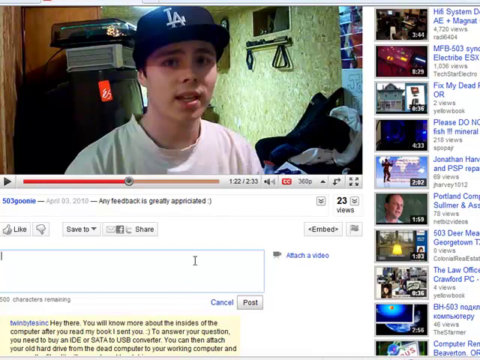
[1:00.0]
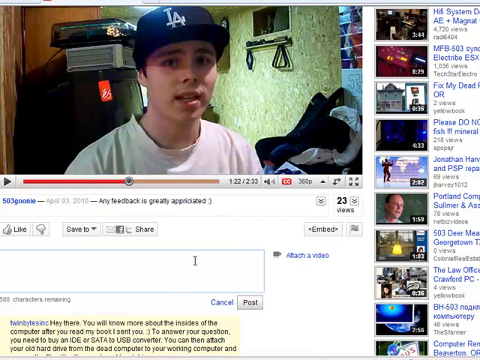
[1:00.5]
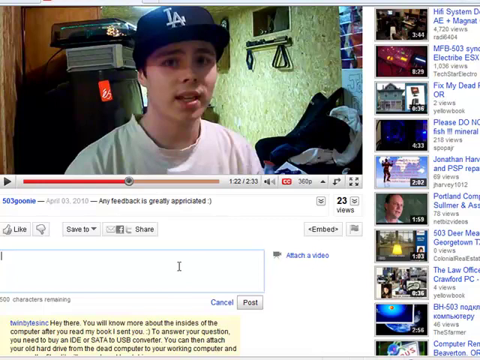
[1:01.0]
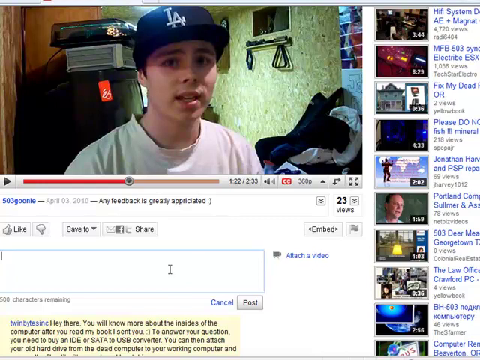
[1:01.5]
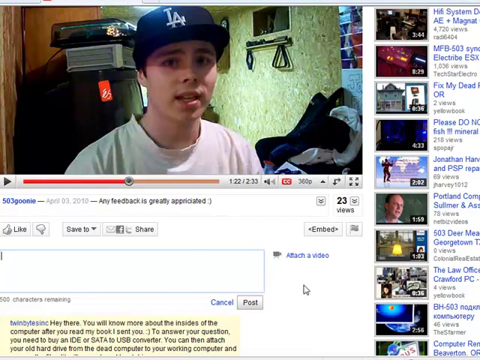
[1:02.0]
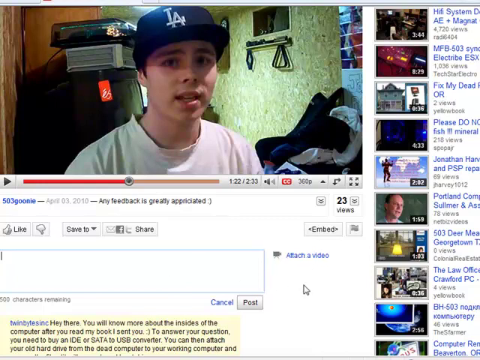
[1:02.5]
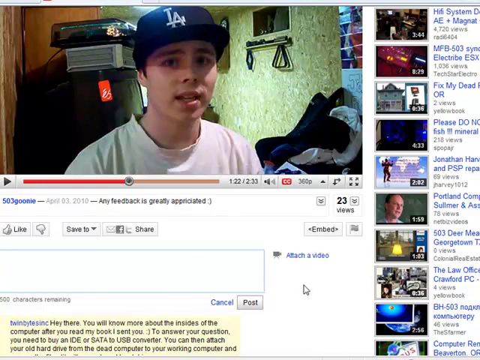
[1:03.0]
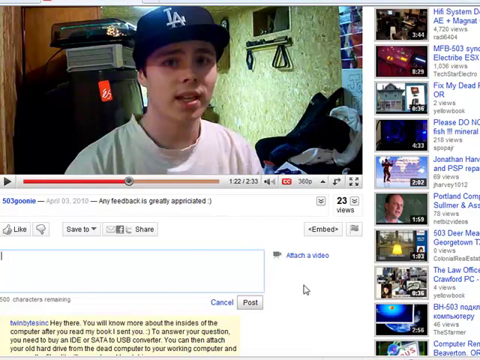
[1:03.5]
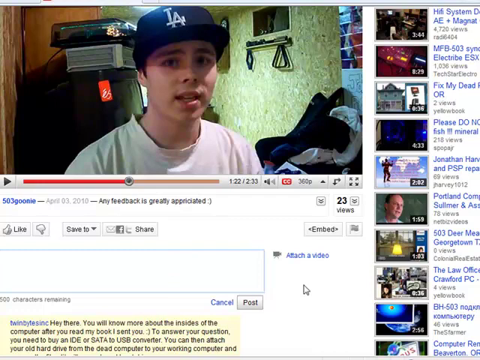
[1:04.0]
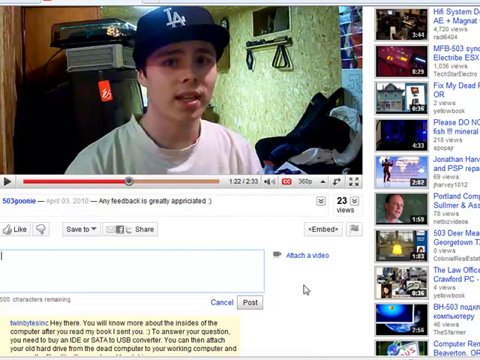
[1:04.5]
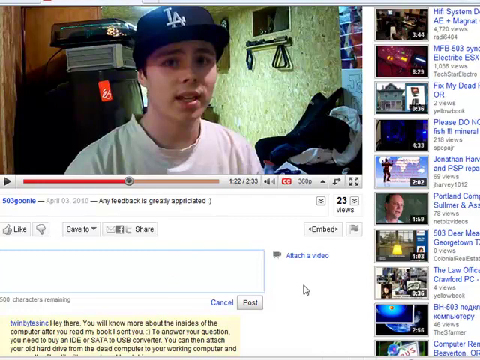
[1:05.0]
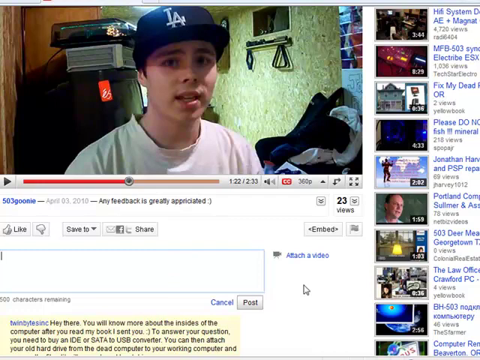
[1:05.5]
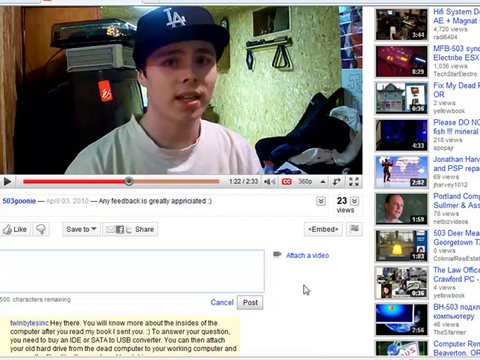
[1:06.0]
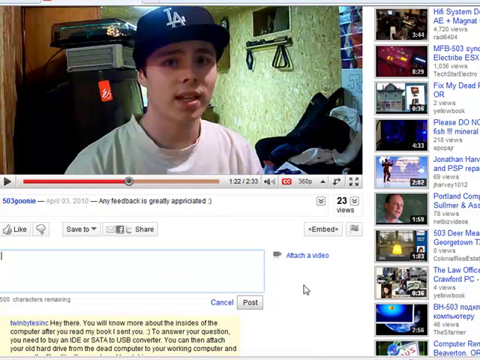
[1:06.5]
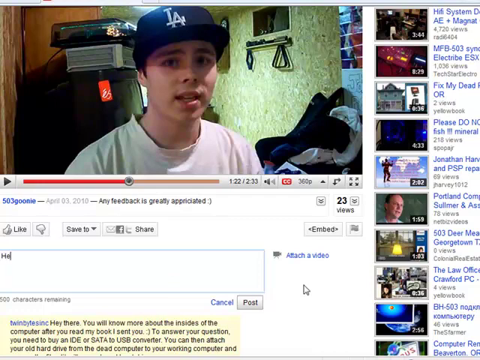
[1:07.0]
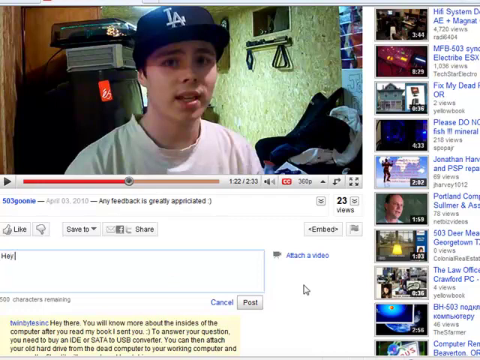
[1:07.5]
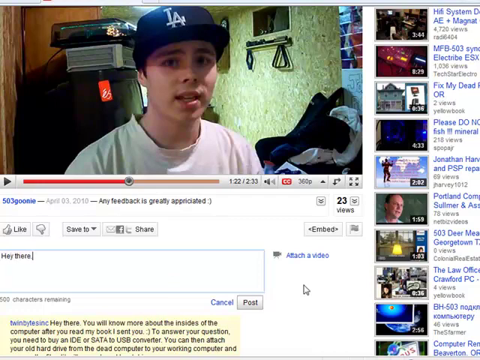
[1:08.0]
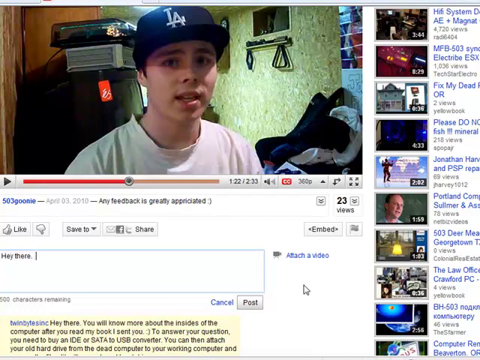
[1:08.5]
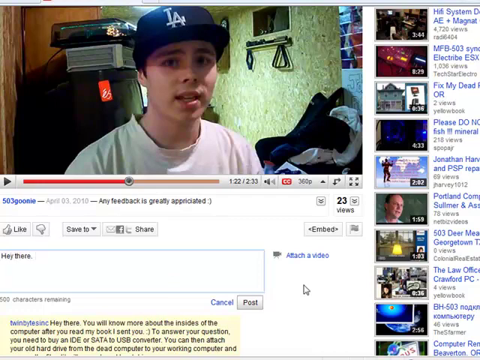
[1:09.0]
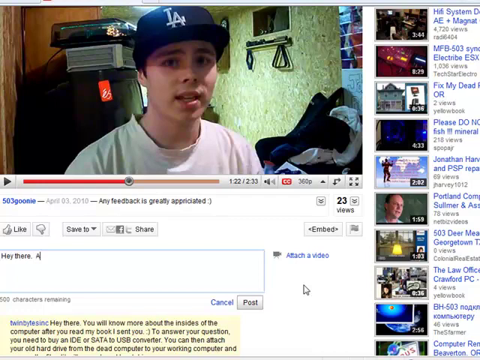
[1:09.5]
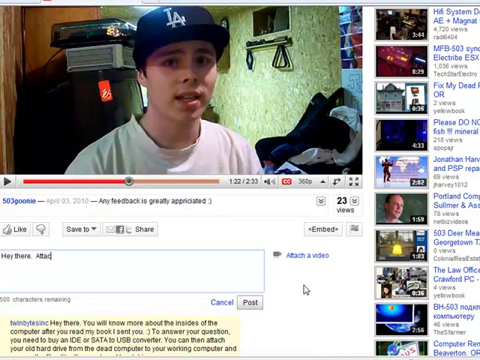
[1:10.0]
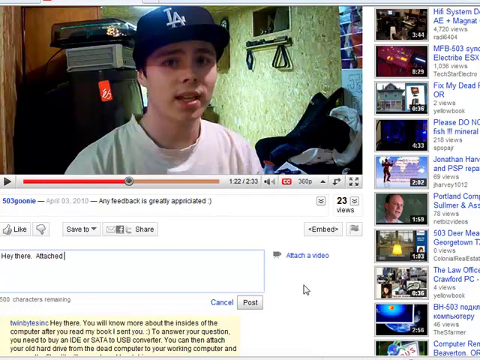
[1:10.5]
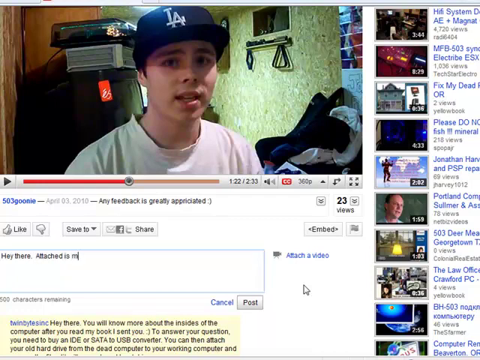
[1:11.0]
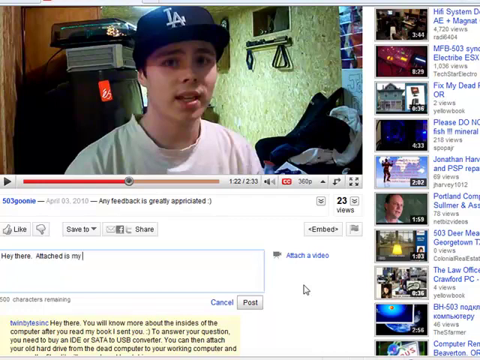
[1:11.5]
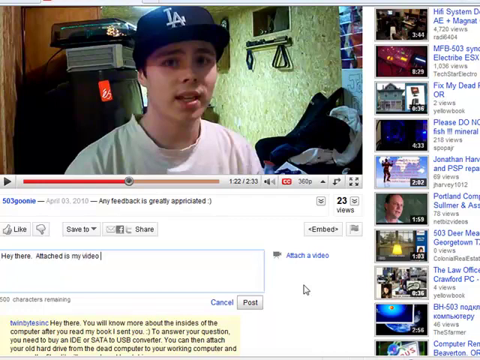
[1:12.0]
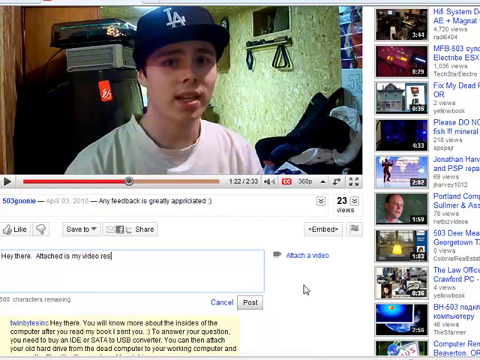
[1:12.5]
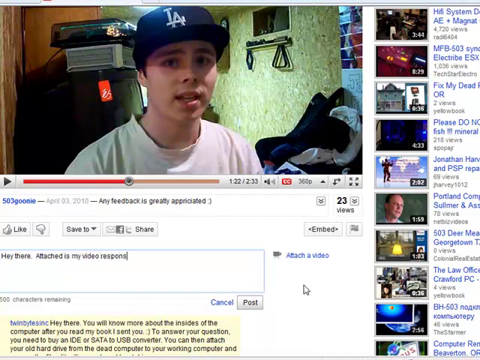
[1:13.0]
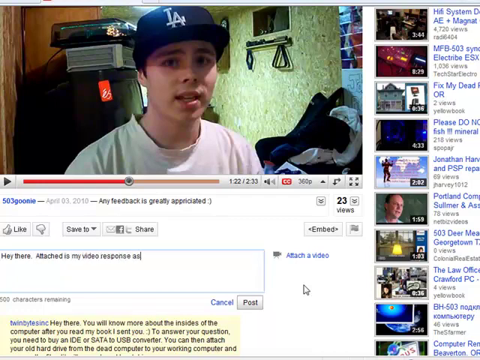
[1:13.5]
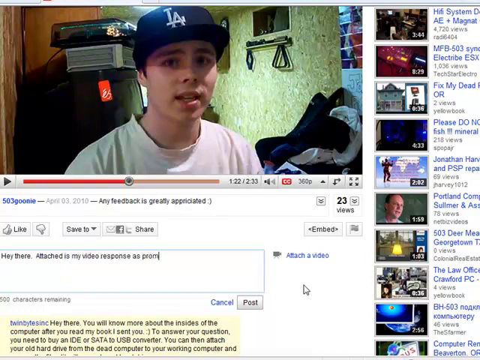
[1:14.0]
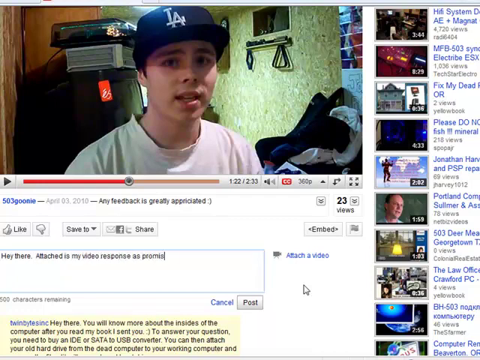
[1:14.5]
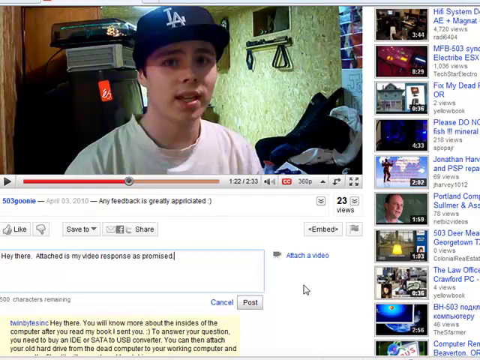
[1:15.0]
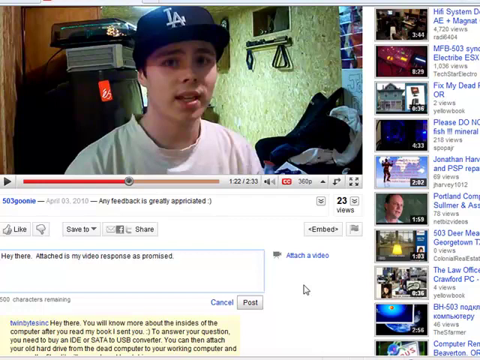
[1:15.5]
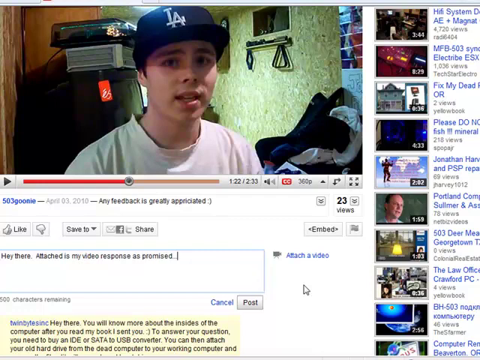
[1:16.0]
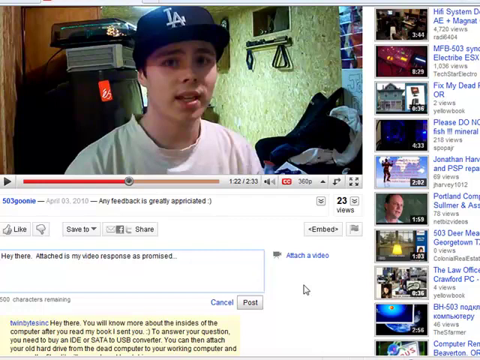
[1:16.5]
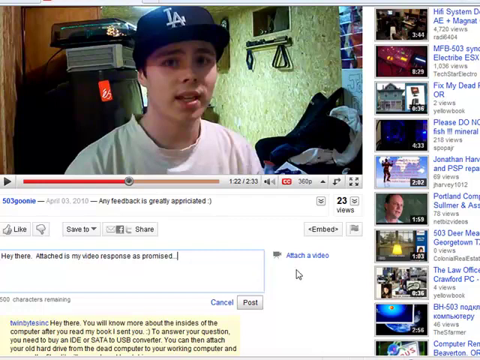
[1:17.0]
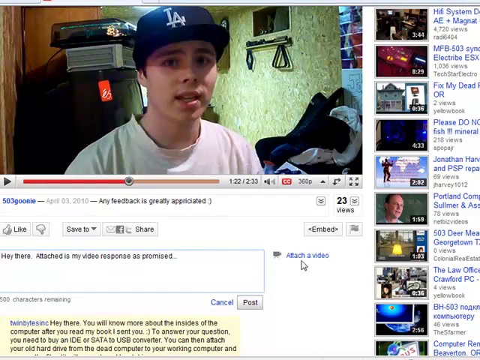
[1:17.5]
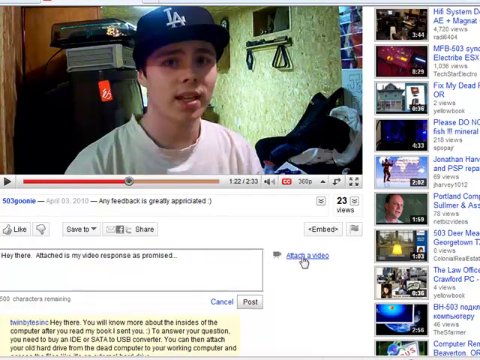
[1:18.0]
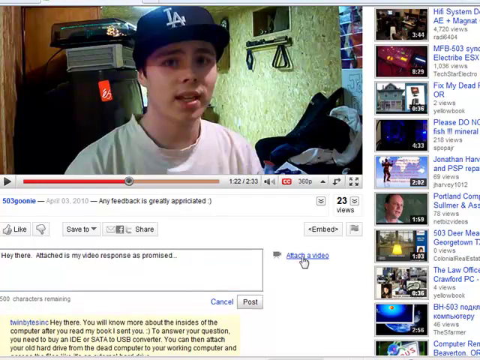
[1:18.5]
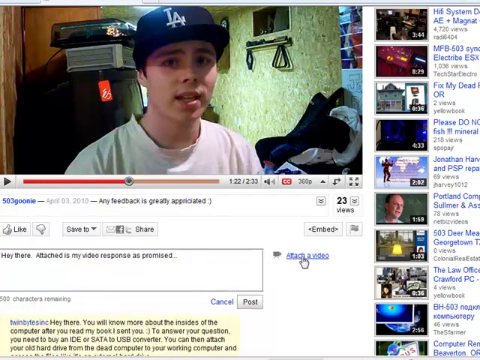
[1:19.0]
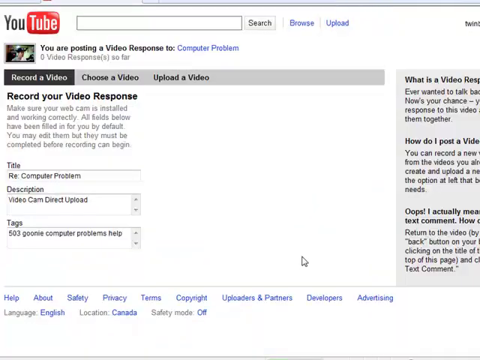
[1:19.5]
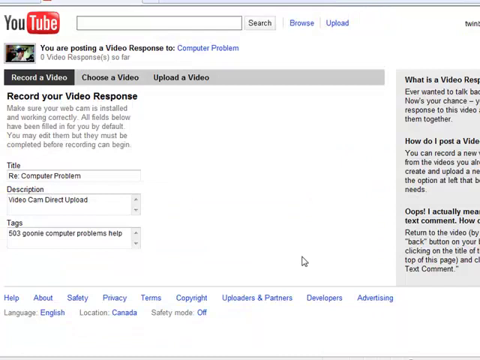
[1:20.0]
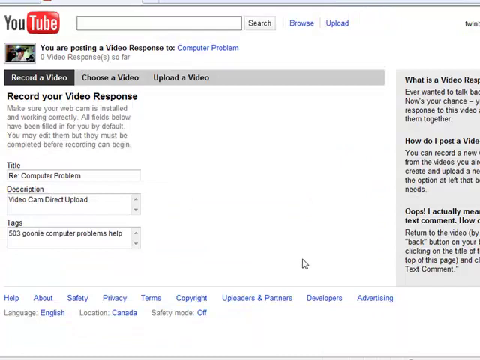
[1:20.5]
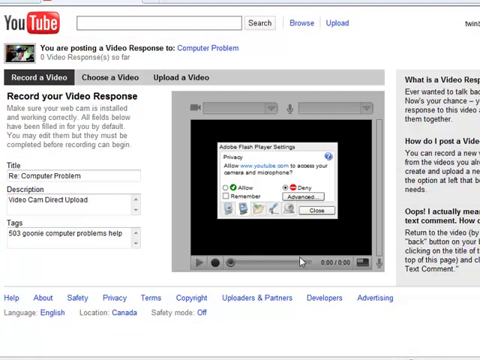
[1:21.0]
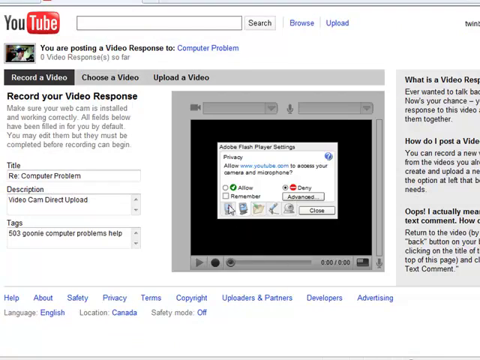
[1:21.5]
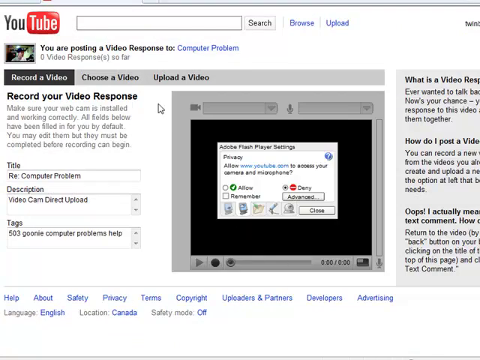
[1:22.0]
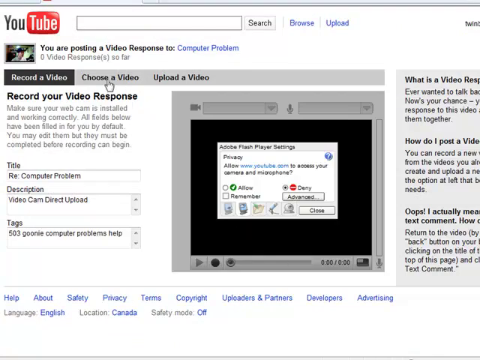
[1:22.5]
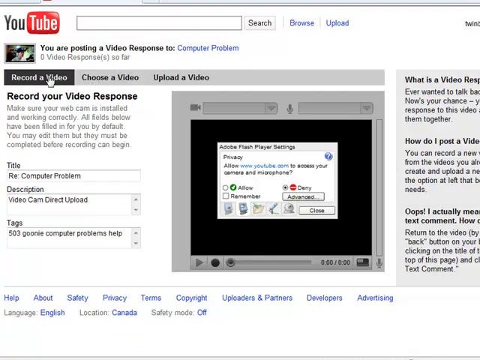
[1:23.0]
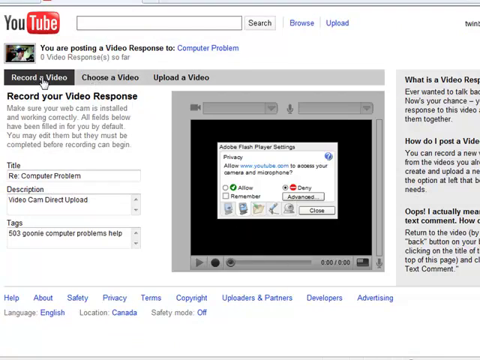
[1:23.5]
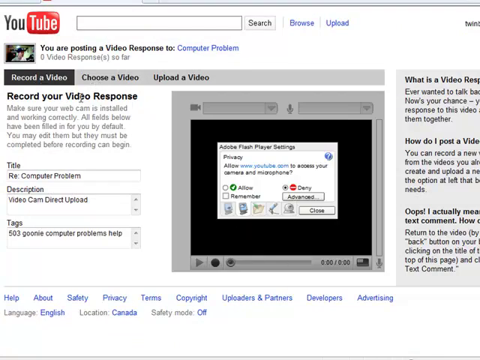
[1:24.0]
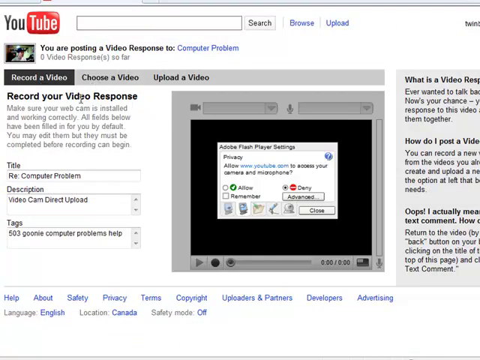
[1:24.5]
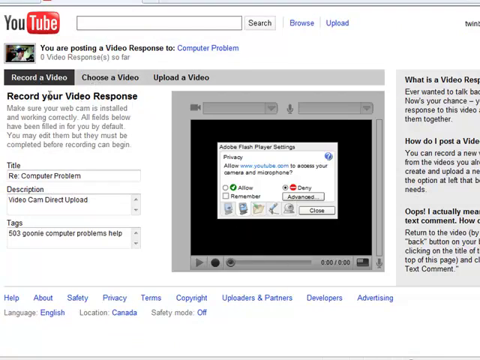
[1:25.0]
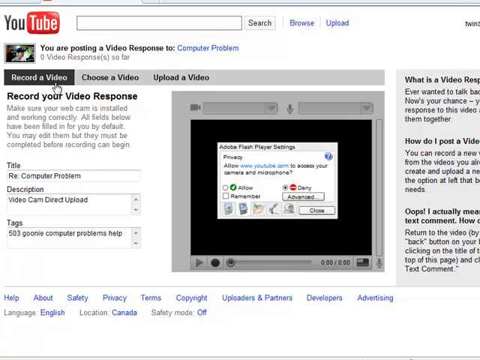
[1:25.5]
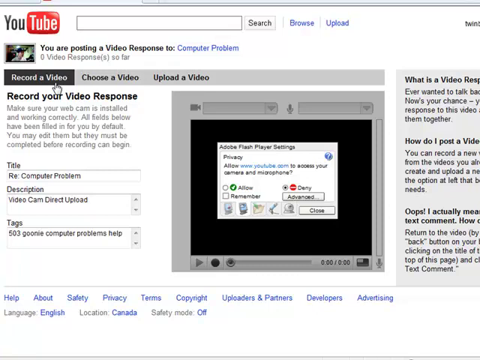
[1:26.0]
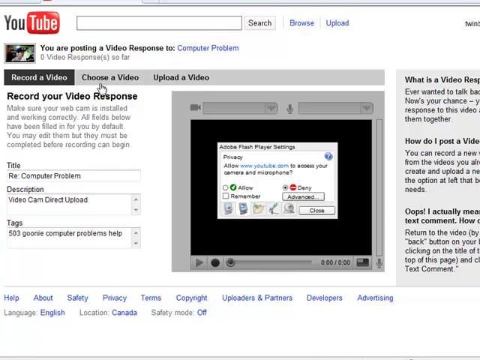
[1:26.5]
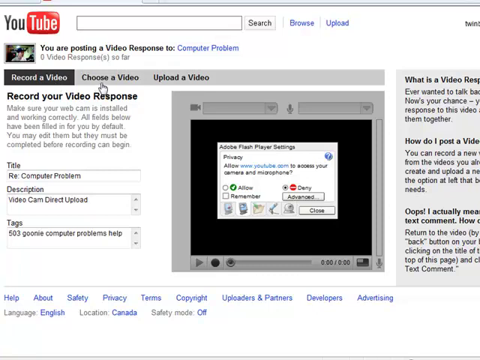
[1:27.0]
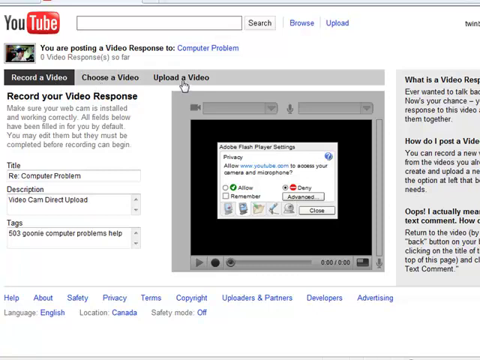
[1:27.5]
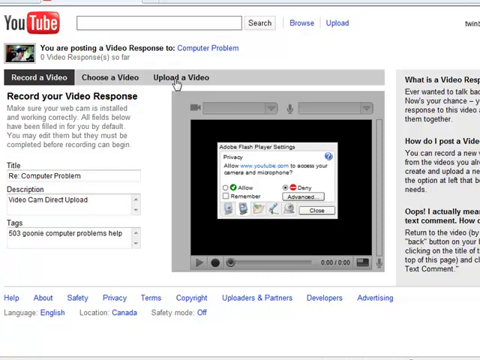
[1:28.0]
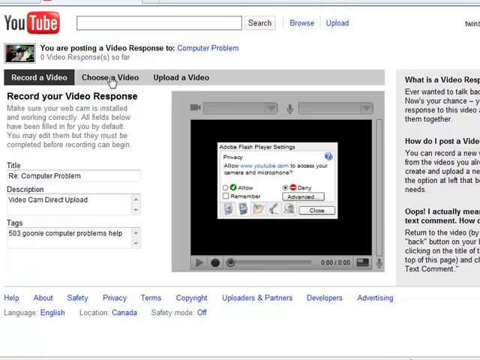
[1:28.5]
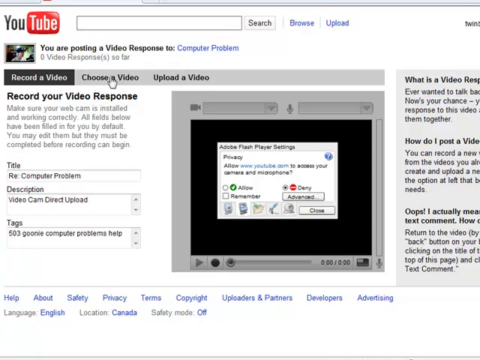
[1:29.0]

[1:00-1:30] The mouse pointer moves across to the right-hand side of the screen, and text is entered into the comment box: "Hey there, attached is my video response as promised...". The pointer then clicks the "attach a video" hyperlink, which opens a new page for recording a video response. On this page the YouTube video is in the top left-hand corner, and below it is text saying "you are posting a video response to" followed by a "Computer Problem" hyperlink back to the original video. Three options are on the screen: "record a video", "choose a video" and "upload a video". Below these options are the words "record your video response". The mouse pointer moves over the three options, showing the process of posting a video response to a YouTube video.